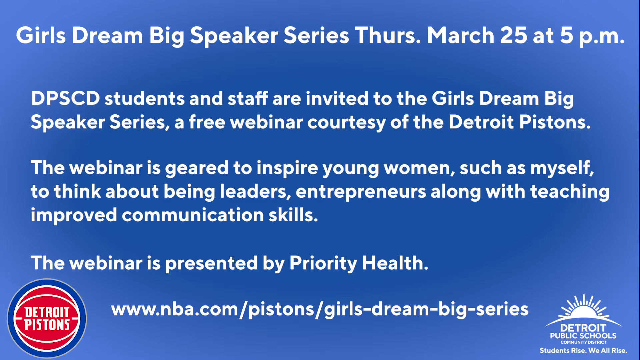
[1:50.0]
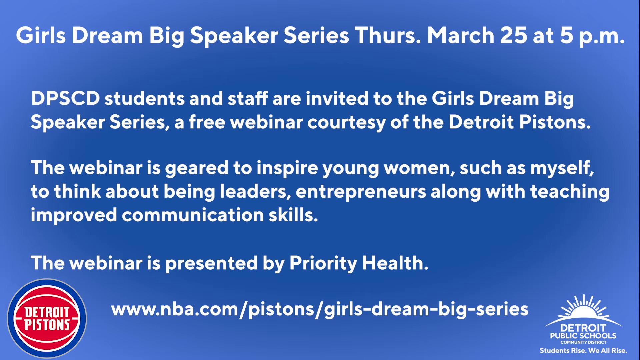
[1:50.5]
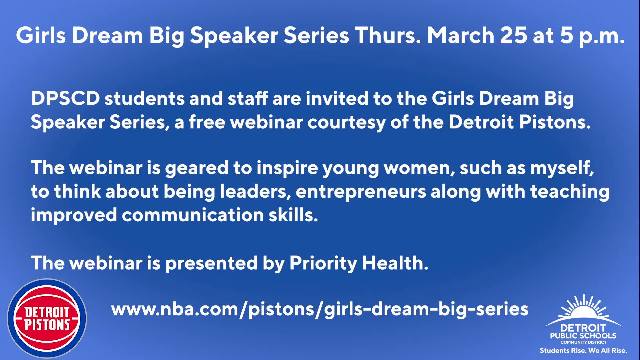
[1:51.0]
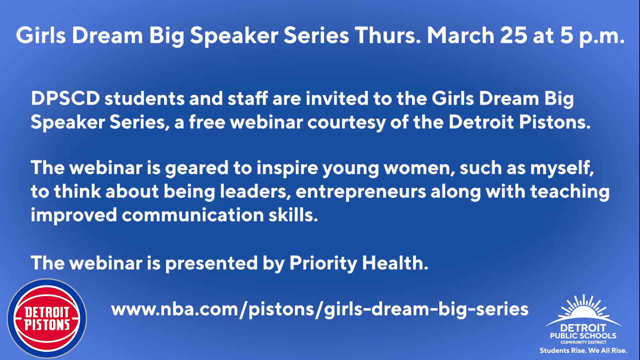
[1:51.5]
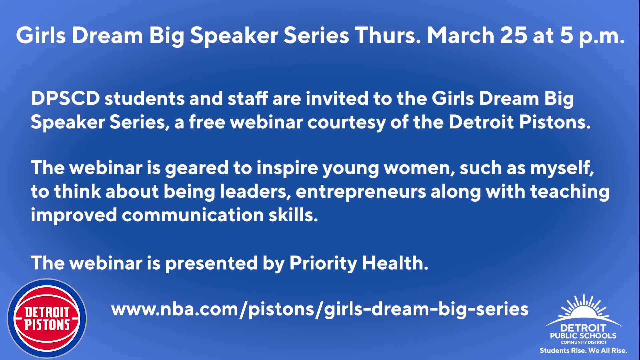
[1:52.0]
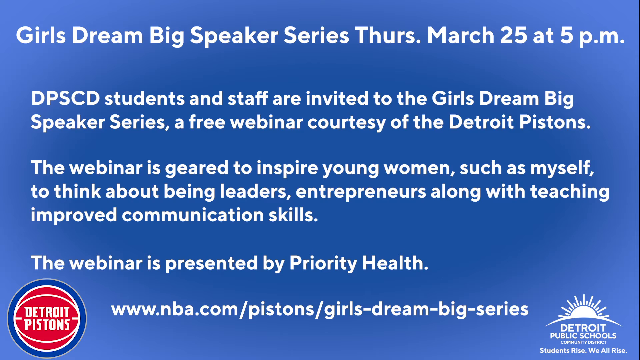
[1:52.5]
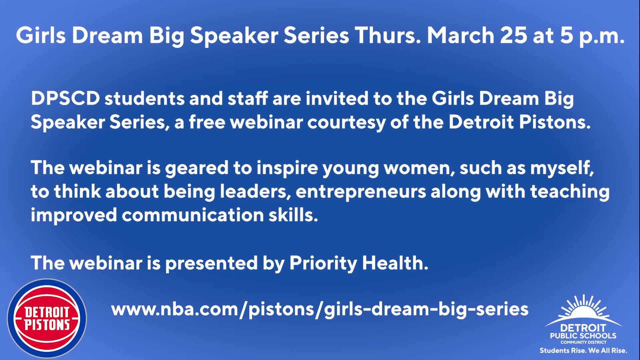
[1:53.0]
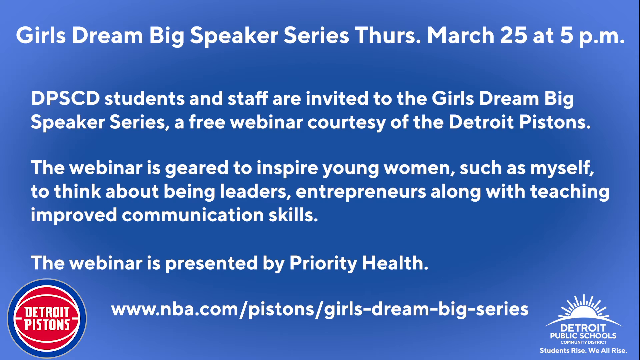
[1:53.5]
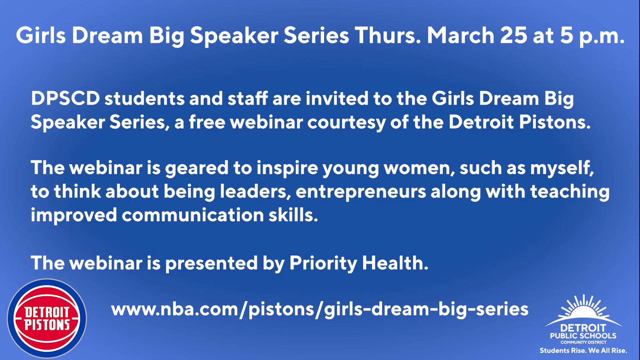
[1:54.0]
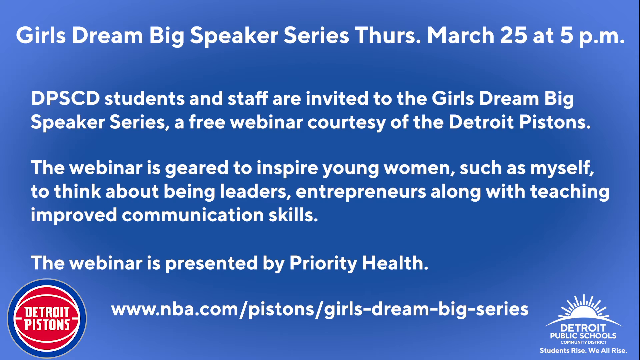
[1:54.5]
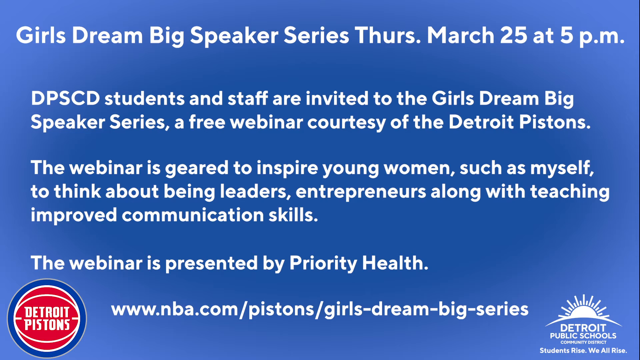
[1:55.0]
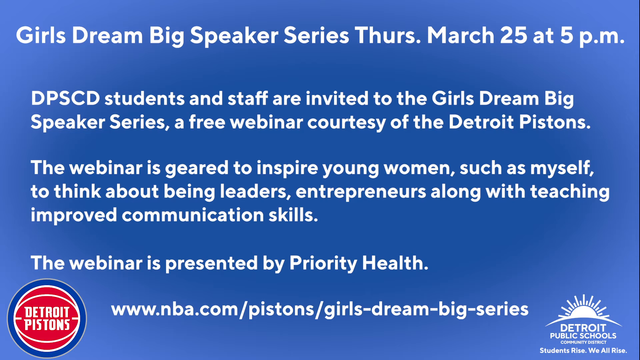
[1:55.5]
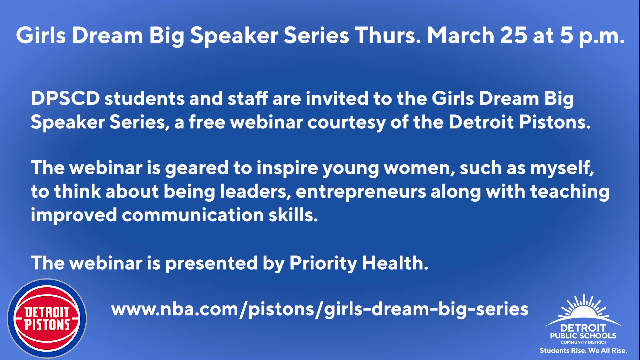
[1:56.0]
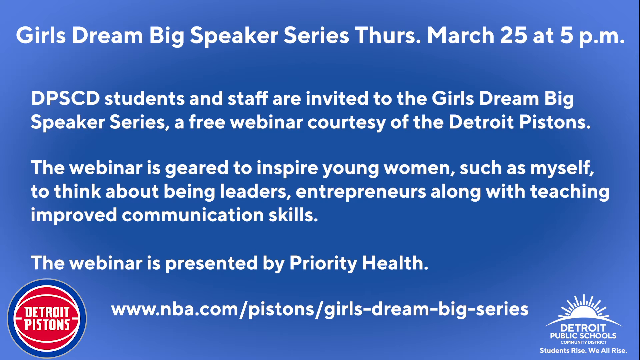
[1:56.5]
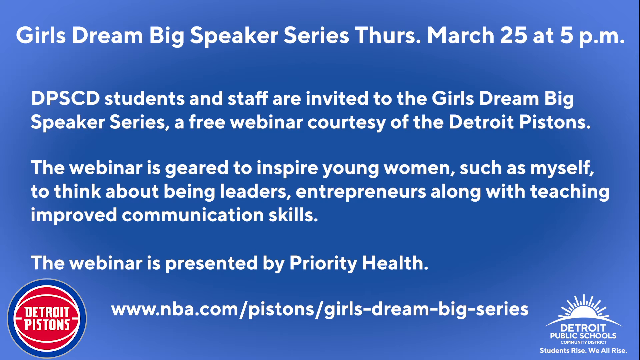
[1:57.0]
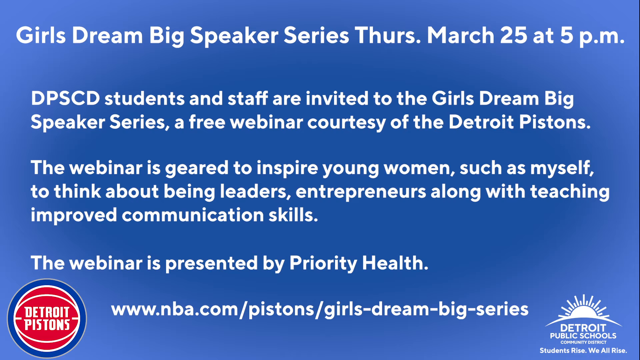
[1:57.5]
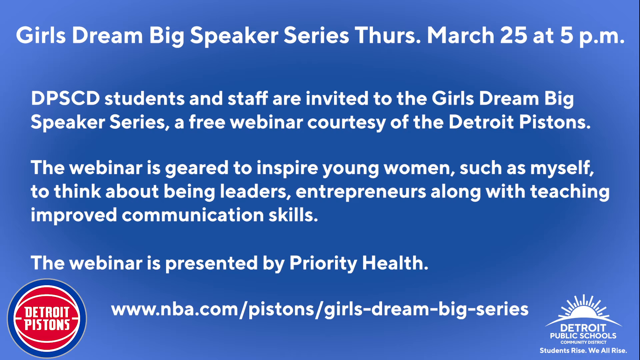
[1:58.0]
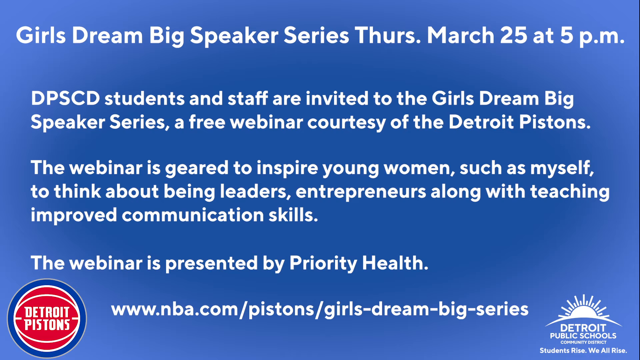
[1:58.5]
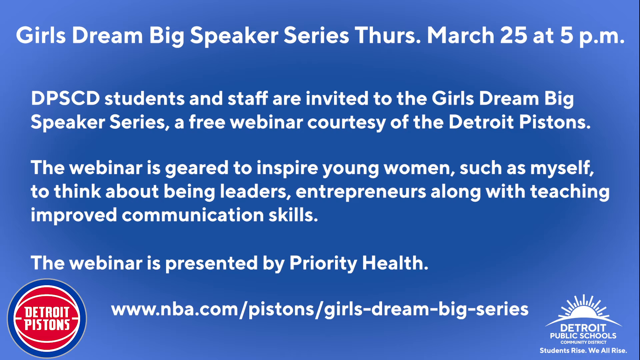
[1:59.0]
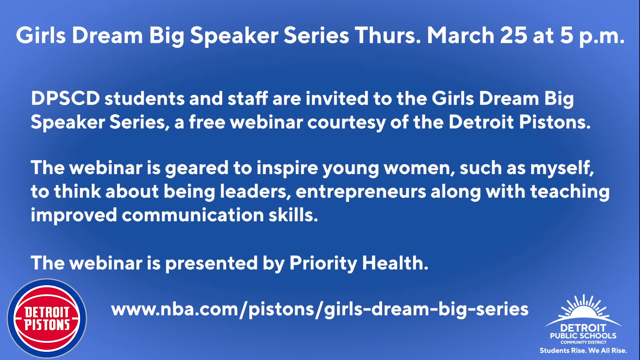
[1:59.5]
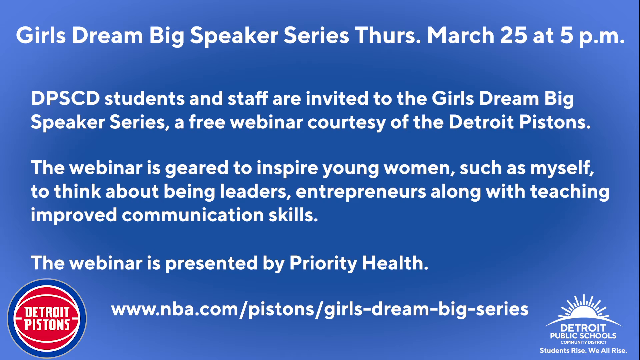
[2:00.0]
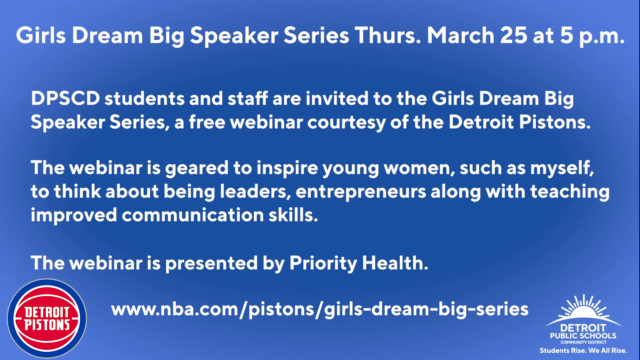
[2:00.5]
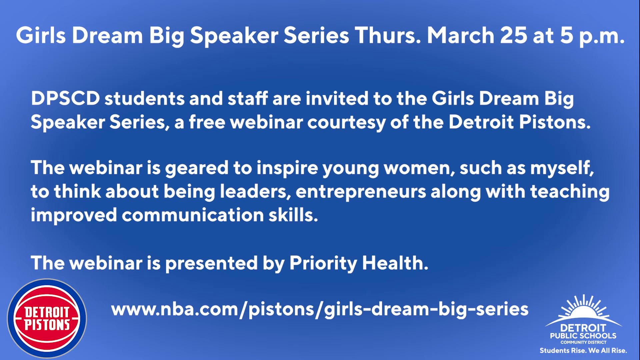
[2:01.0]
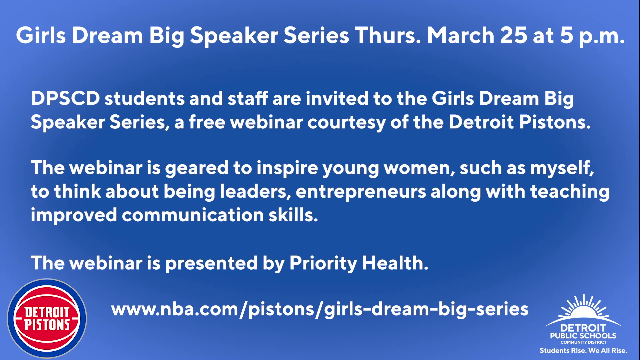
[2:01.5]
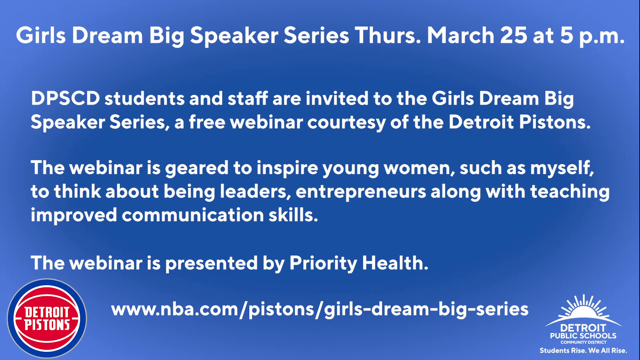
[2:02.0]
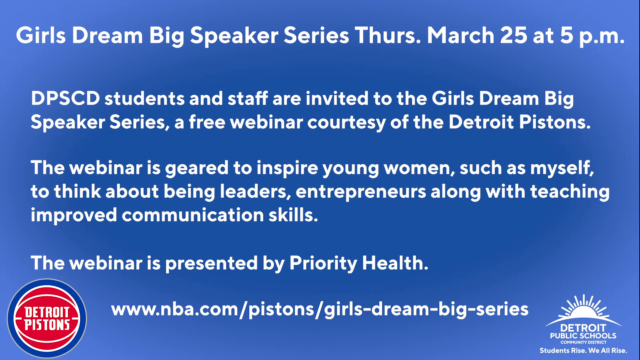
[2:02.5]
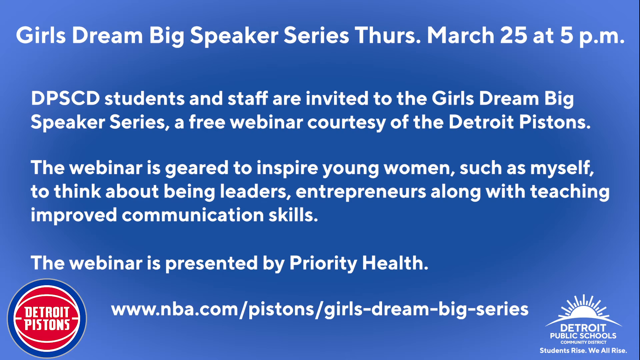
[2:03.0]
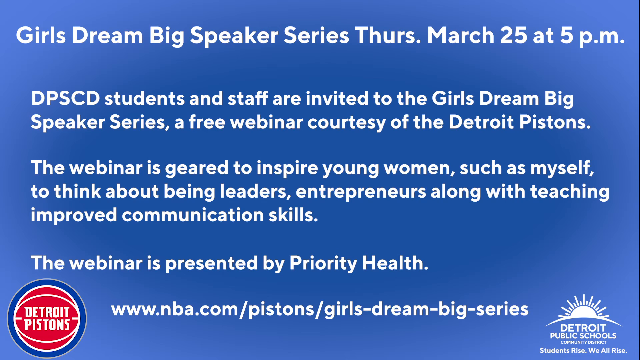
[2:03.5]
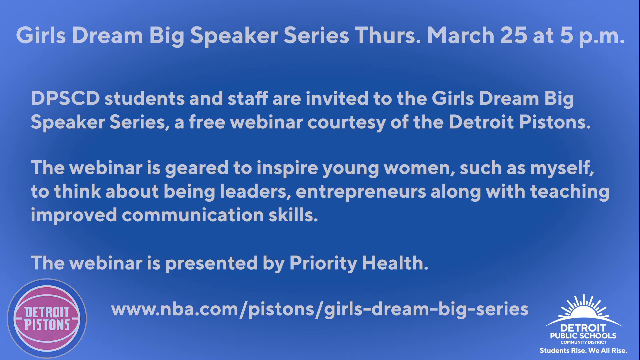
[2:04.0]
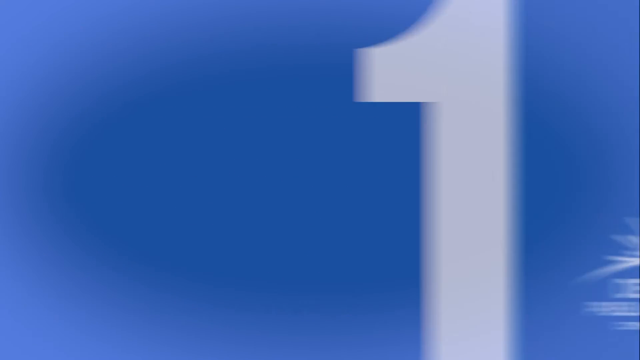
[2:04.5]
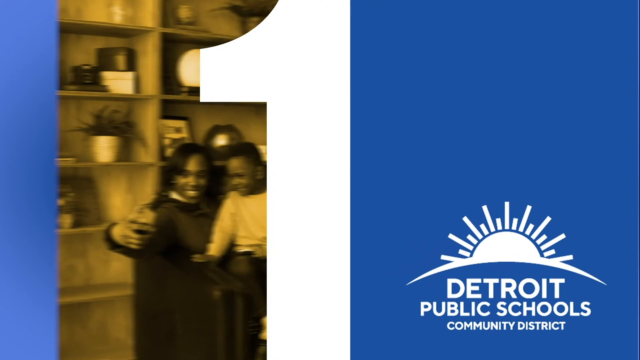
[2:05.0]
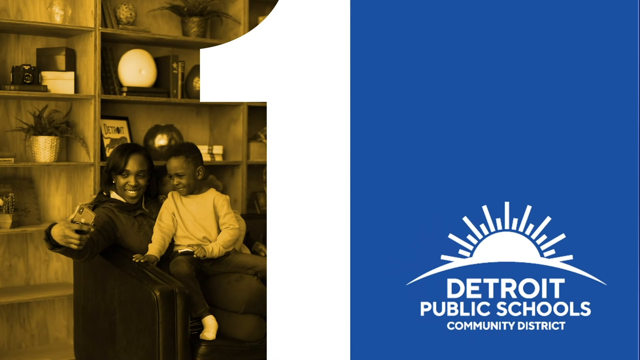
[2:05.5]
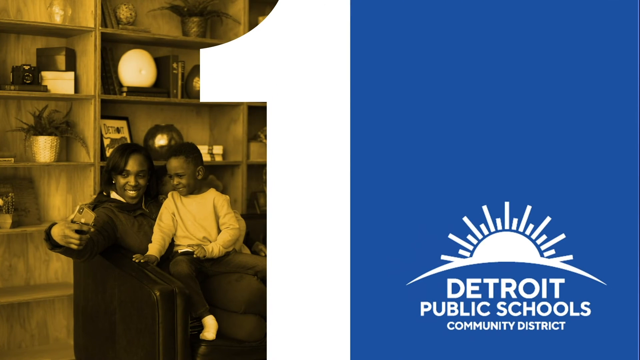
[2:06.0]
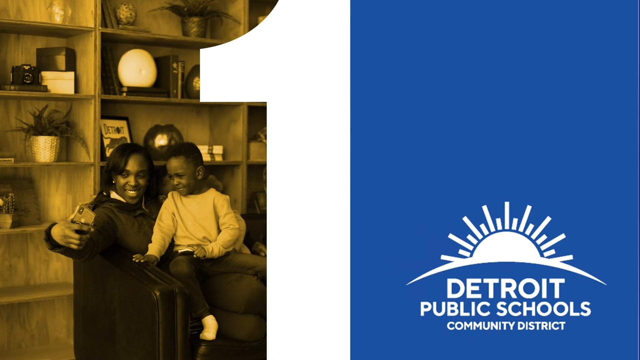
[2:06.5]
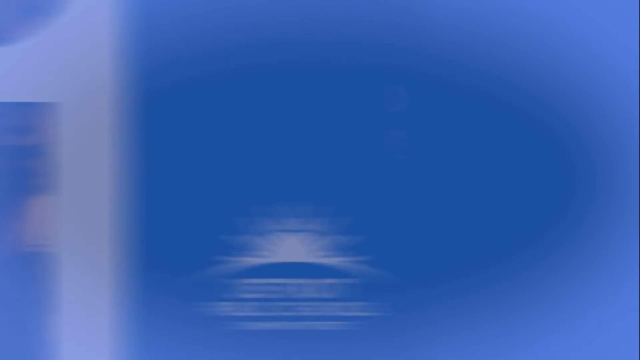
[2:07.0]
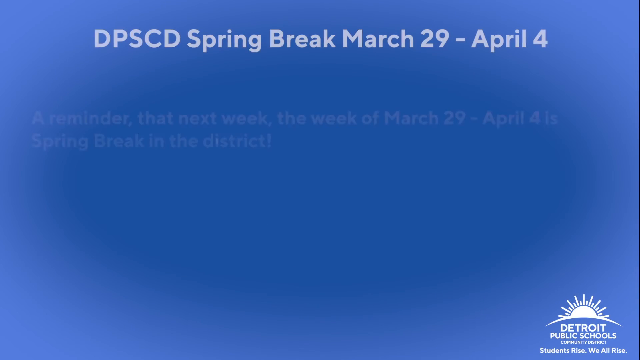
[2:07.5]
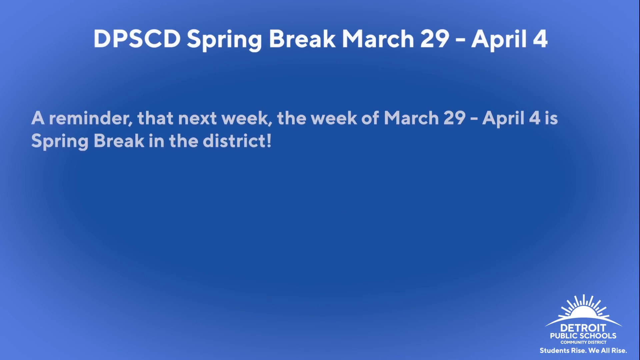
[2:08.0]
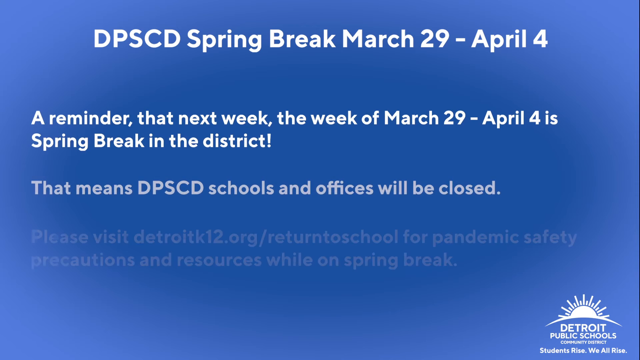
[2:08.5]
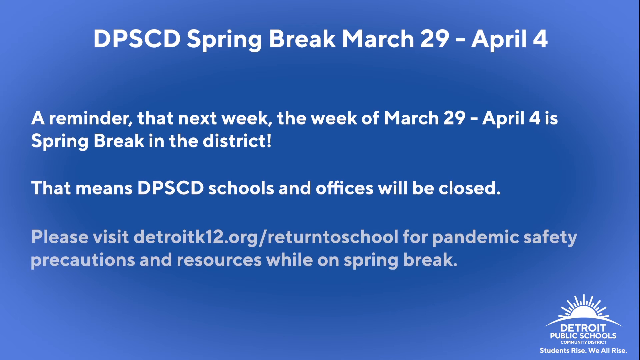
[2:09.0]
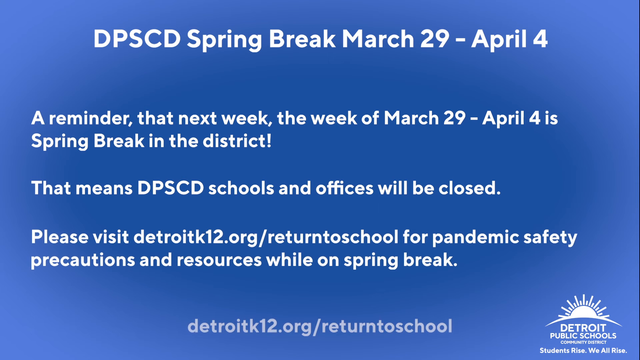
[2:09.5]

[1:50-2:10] The video transitions to a screen with a big white 1 in the center. To the left of the 1 is a photo of what appears to be a lady with a little boy in her lap and shelves behind her; the photo has a vintage filter. To the right is blue, with the Detroit Public Schools Community District logo at the bottom center of the screen. The next page features writing that says "DPSCD Spring Break March 29th through April 4th. A reminder that next week, the week of March 29th through April 4th is Spring Break in the District. That means DPSCD schools and offices will be closed. Please visit DetroitK12.org/return to school for pandemic safety precautions and resources while on Spring Break." The link to the website is at the bottom of the page.